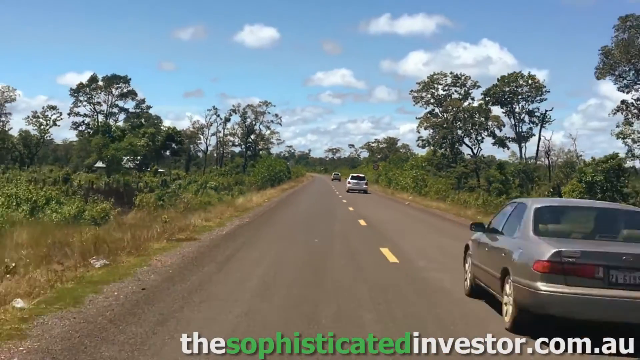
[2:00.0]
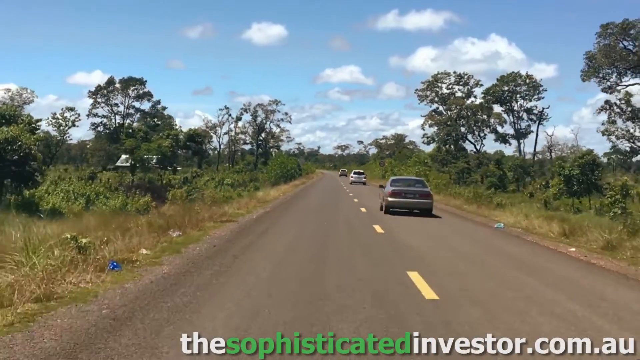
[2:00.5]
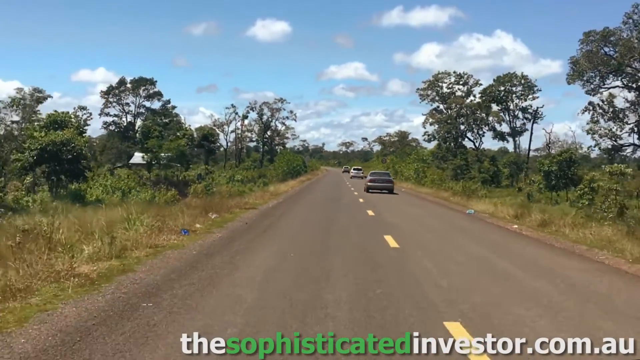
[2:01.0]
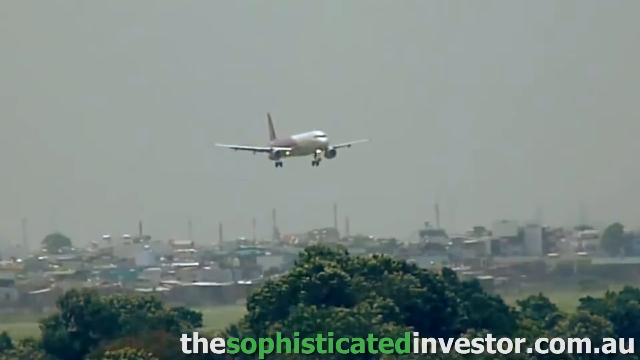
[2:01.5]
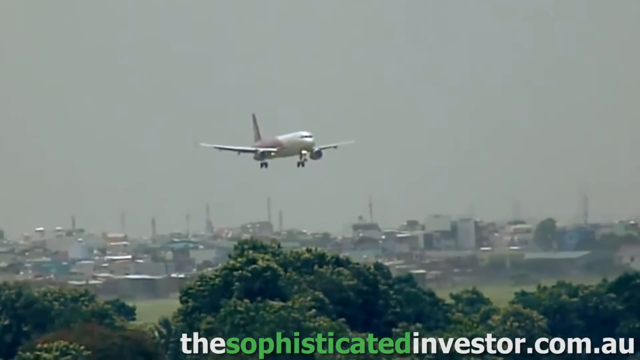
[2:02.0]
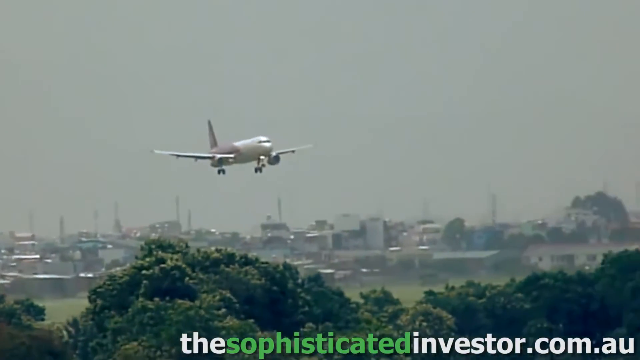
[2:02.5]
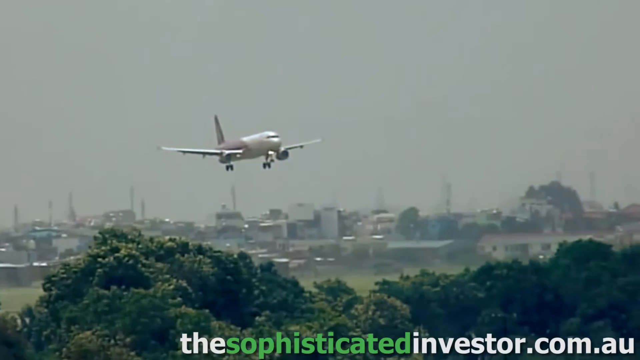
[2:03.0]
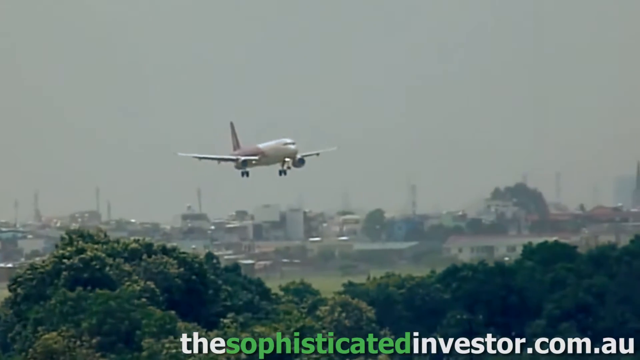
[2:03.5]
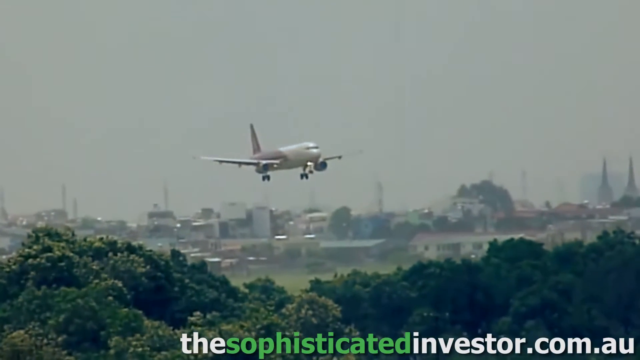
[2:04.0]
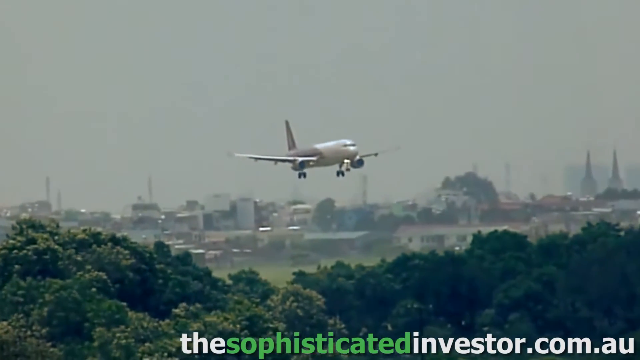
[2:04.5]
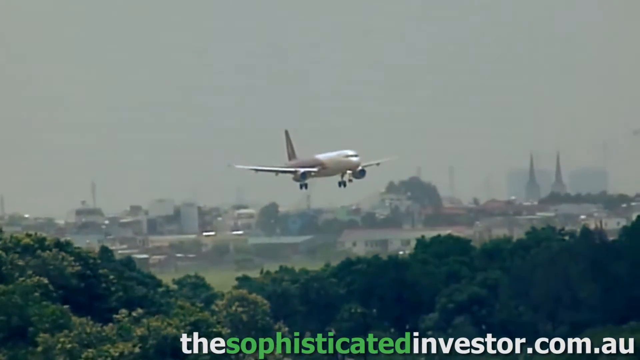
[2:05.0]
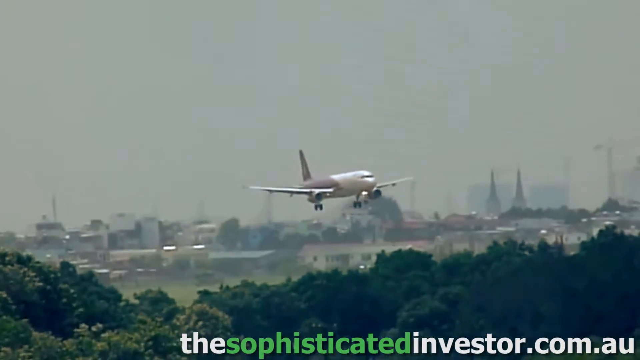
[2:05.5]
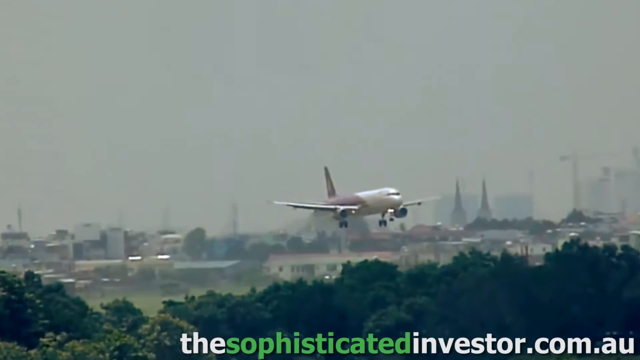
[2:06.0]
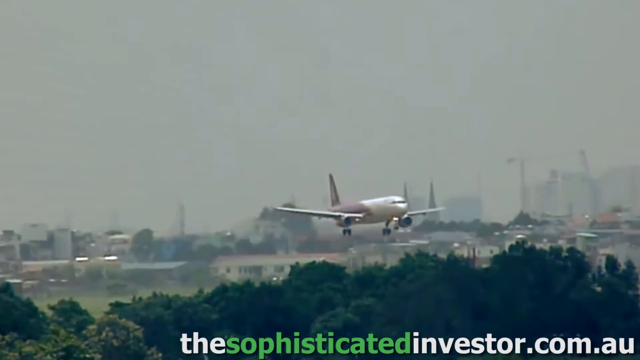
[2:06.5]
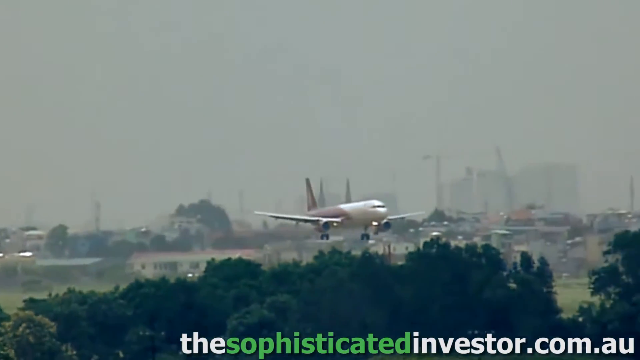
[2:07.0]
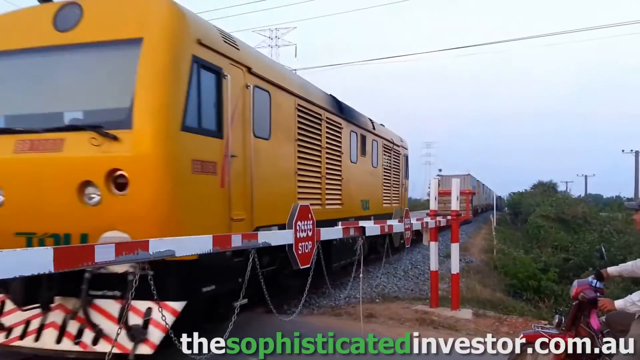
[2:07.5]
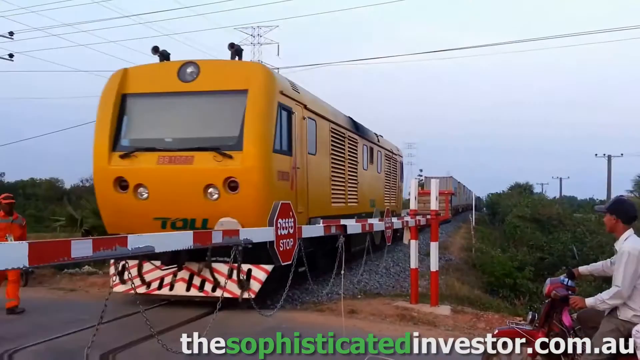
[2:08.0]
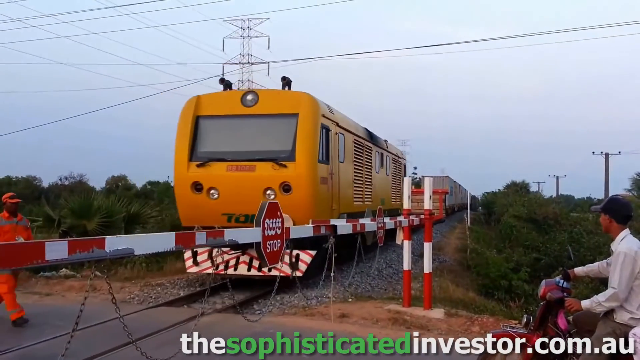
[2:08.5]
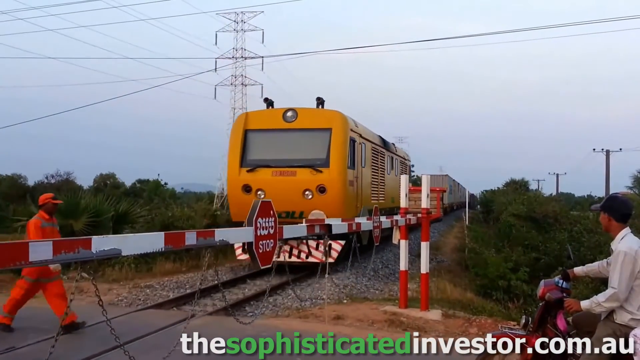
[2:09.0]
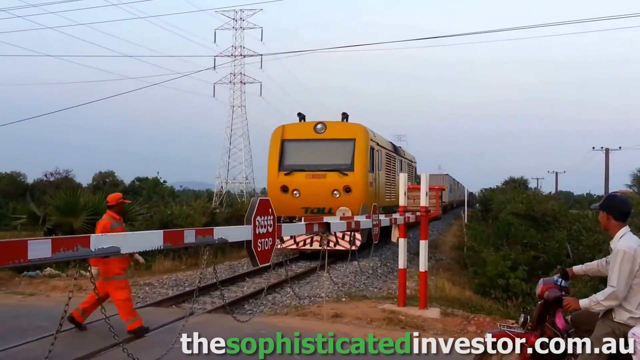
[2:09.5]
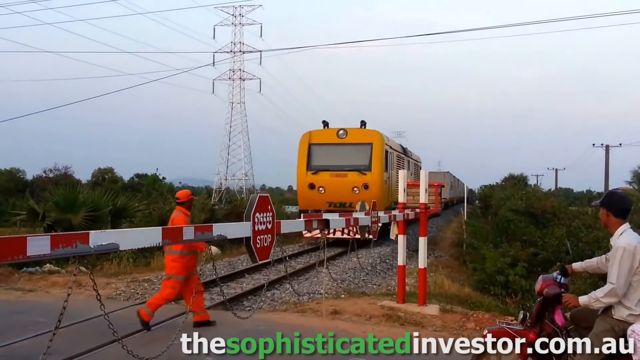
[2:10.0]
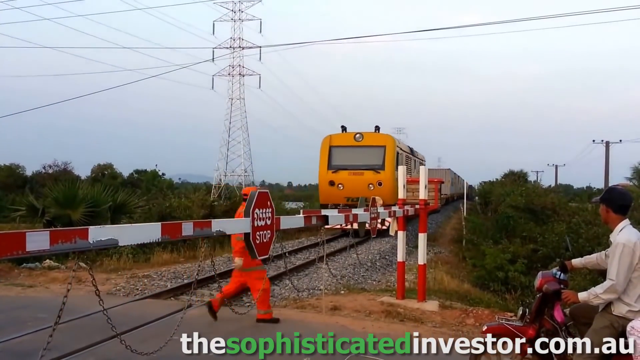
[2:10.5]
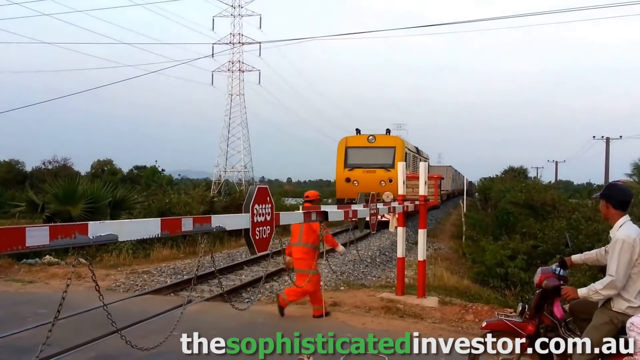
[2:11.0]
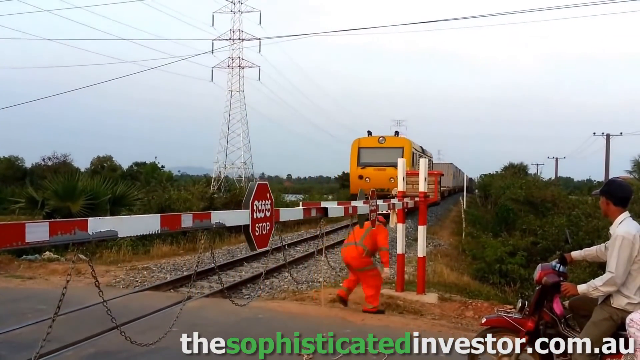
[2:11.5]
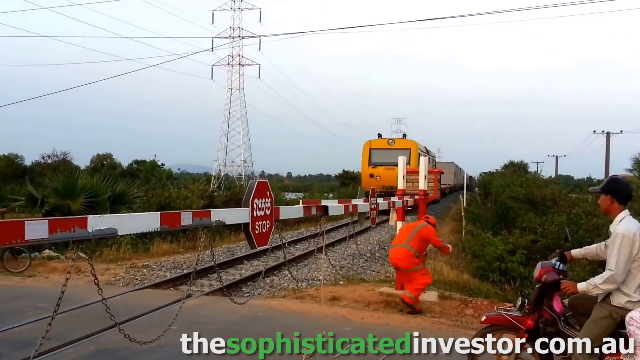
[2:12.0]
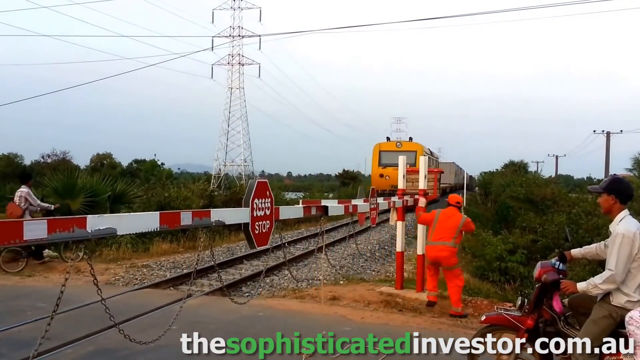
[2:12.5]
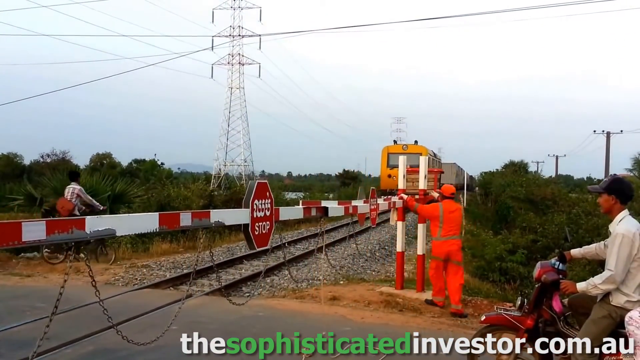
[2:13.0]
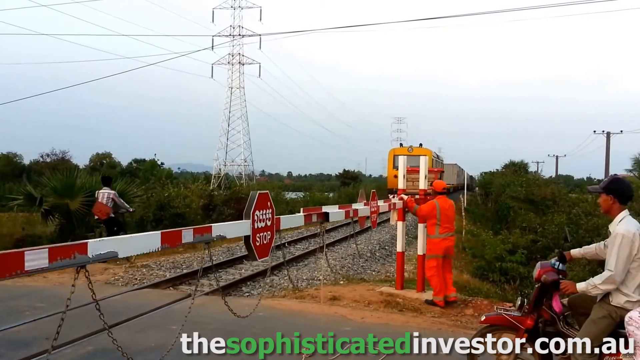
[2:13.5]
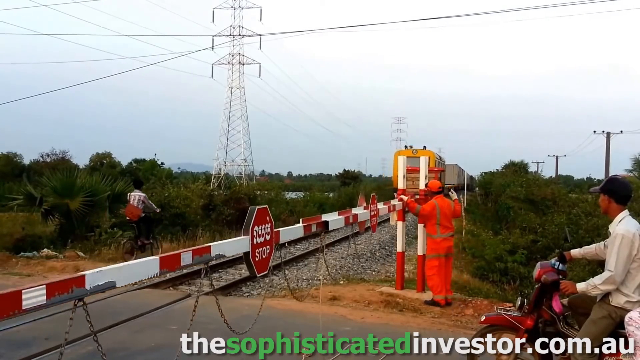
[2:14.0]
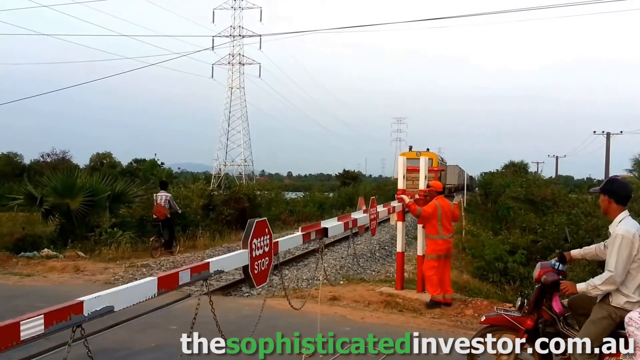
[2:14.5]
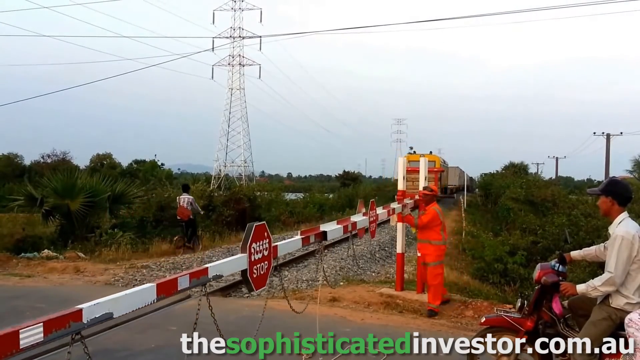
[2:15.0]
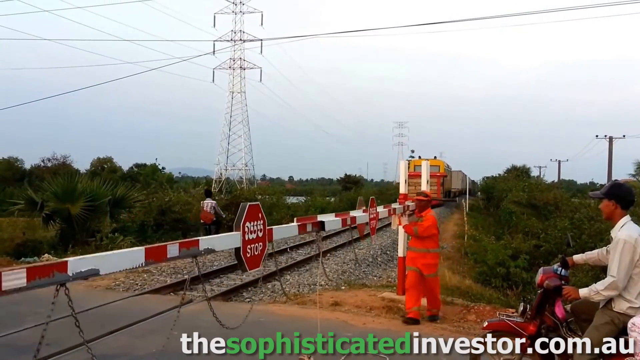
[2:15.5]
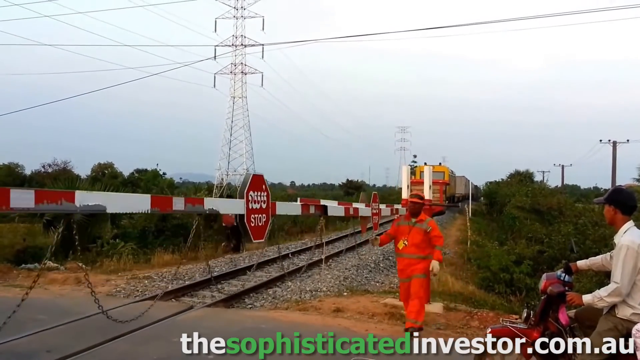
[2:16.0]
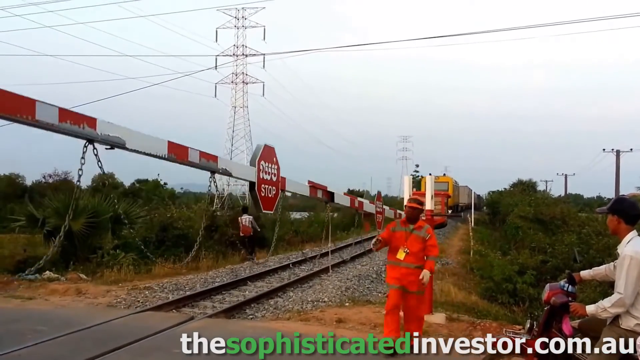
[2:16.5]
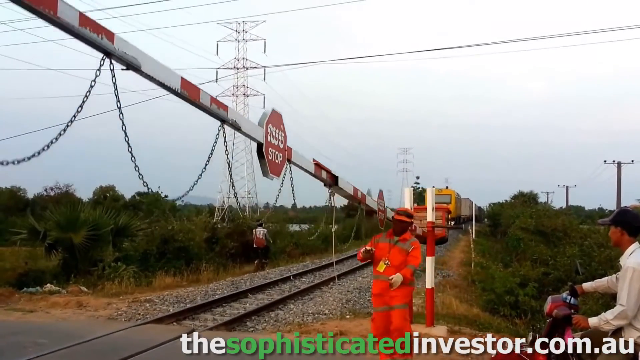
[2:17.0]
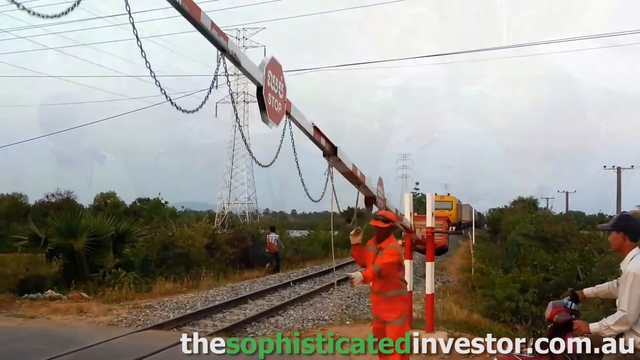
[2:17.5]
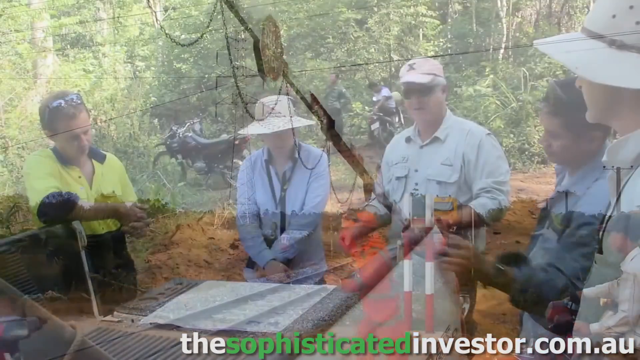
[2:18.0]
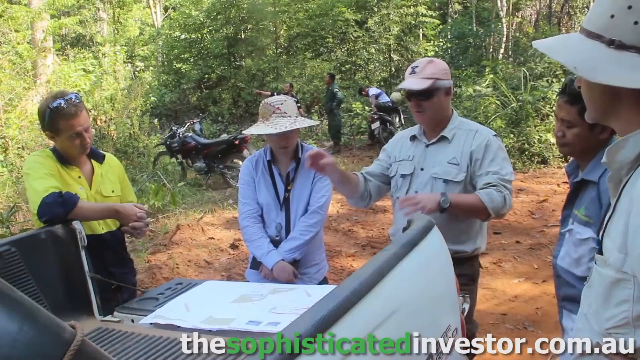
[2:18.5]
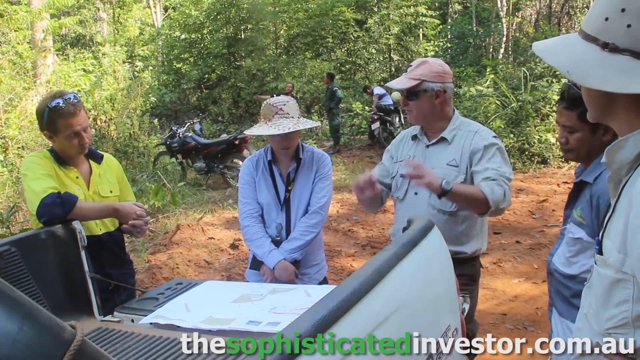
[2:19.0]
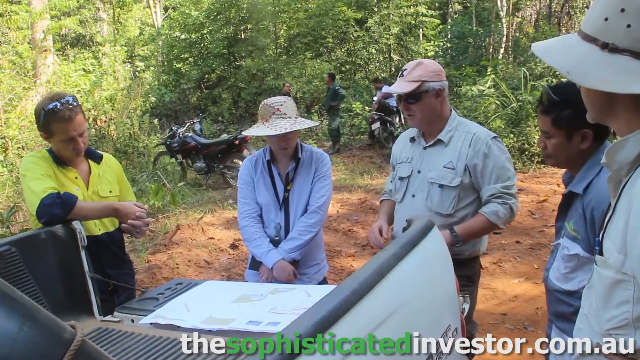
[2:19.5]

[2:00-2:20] Filming from the left-hand lane of a road, the camera appears to move backwards while a few cars in the right-hand lane drive away into the distance. Green vegetation lines the left and right sides of the road. The video then cuts abruptly to what appears to be an overcast, very smoggy day, with the sky occupying about the top two-thirds of the frame. A plane on the center left side comes toward the lower right-hand corner, appearing to land as it descends slowly, and some buildings are visible in the background amid the smog. Next, a train goes from the lower left toward the center of the image, with the top half filled with overcast blue sky. At the bottom, a red and white barrier with some caution signs on it separates the right side from the left, possibly to stop cars from going into the train area; the barrier is down. The video then transitions to a couple of older people in the center who appear to be talking to one another and seem to face generally toward the camera.